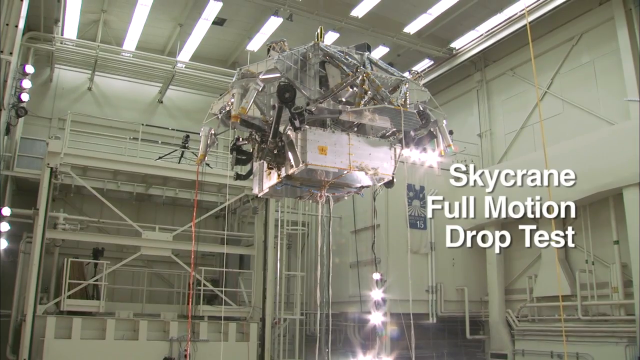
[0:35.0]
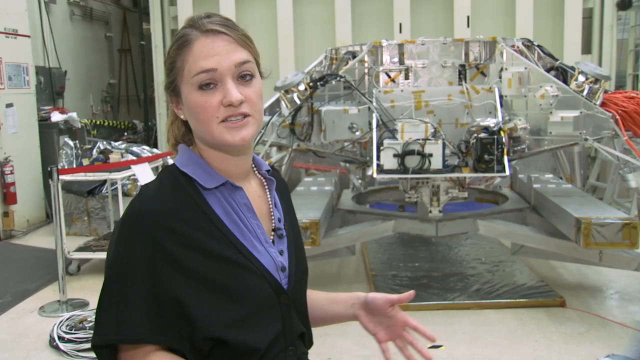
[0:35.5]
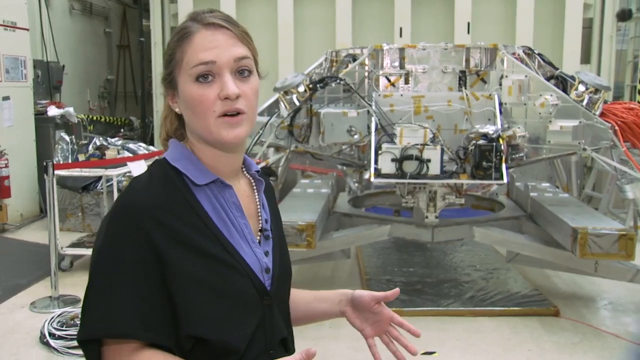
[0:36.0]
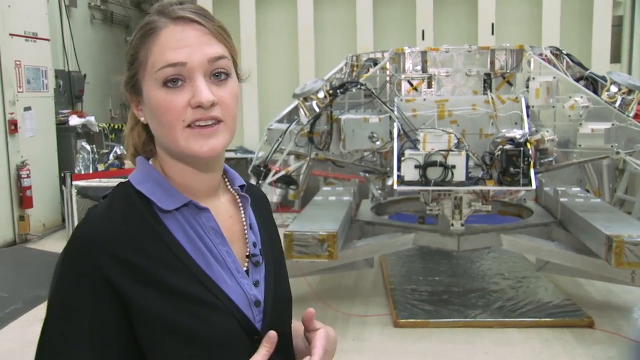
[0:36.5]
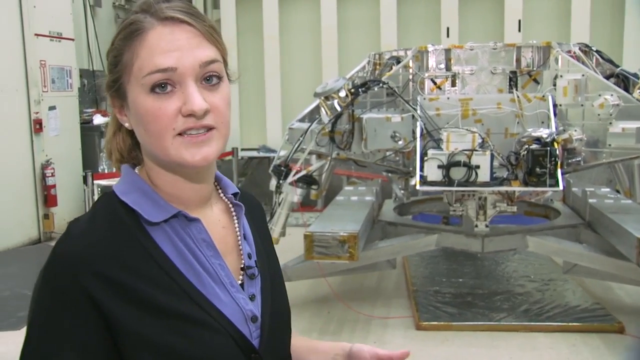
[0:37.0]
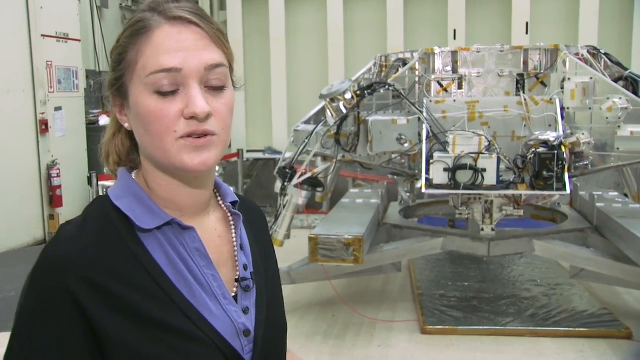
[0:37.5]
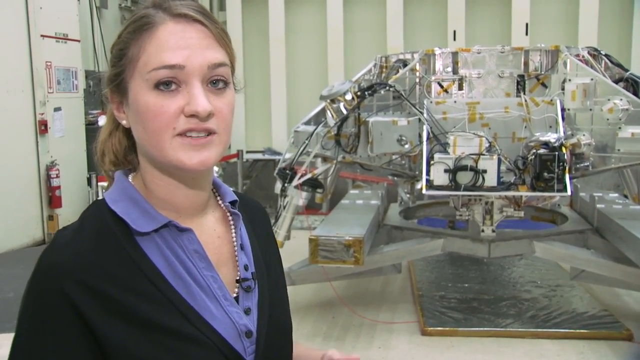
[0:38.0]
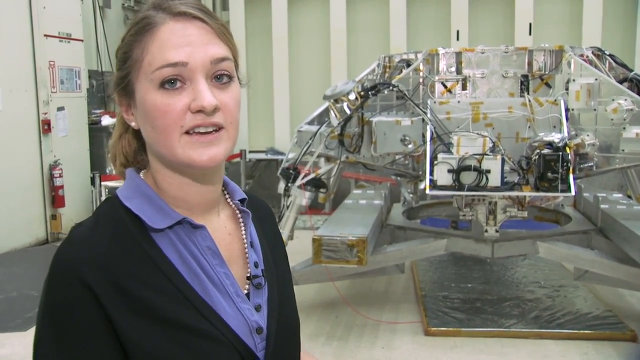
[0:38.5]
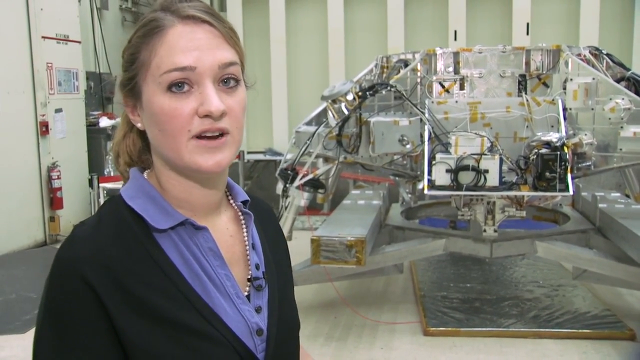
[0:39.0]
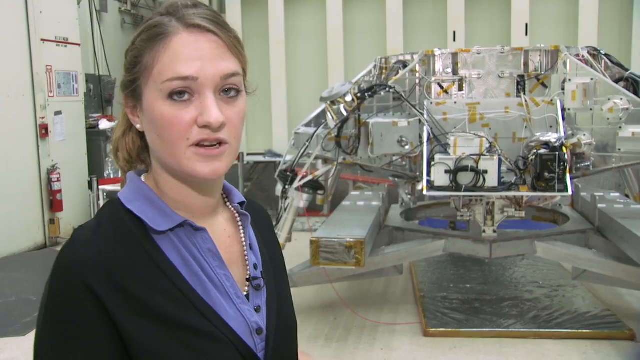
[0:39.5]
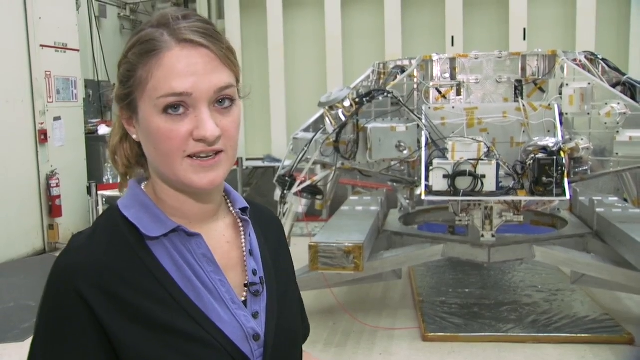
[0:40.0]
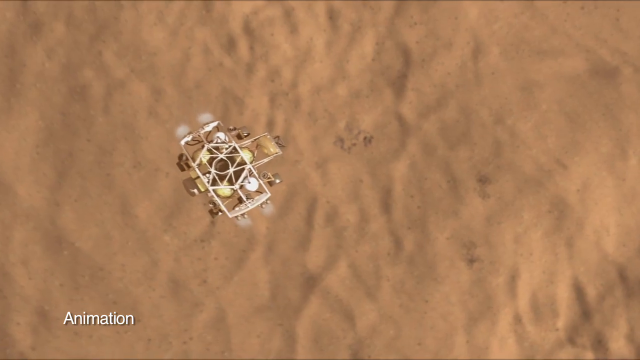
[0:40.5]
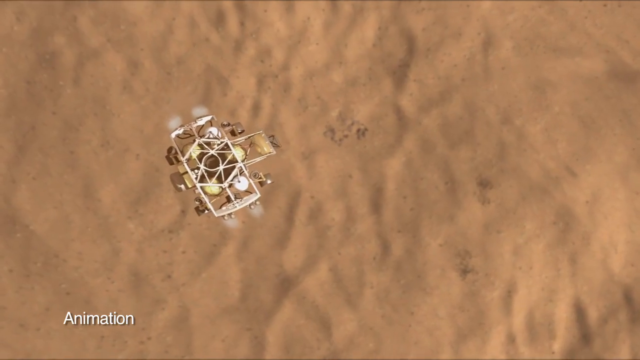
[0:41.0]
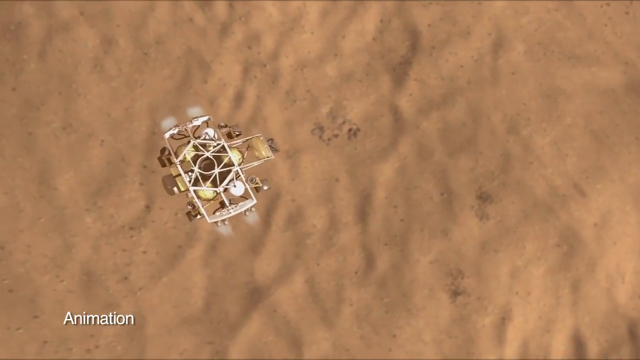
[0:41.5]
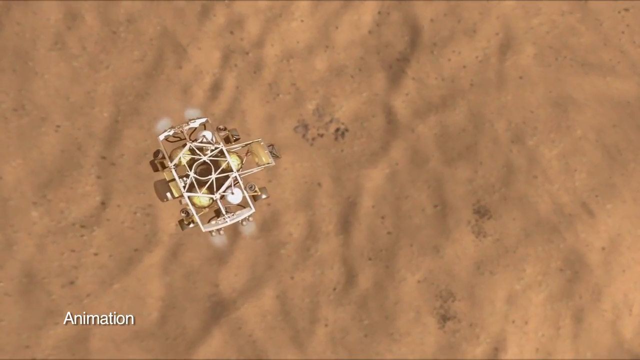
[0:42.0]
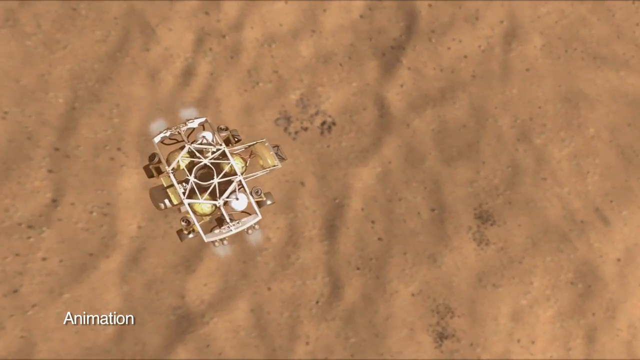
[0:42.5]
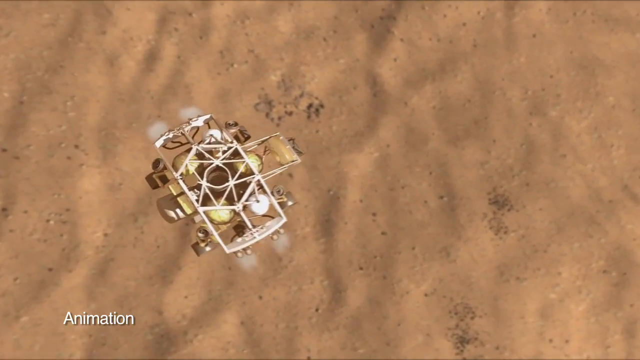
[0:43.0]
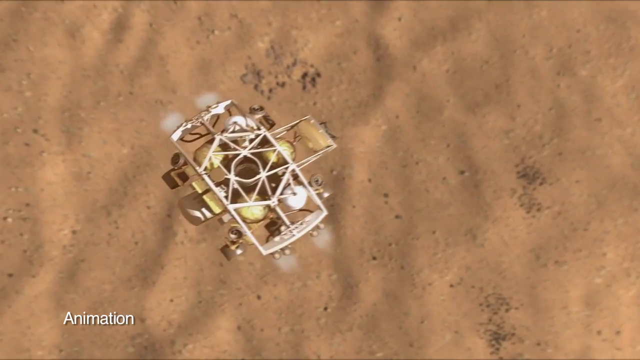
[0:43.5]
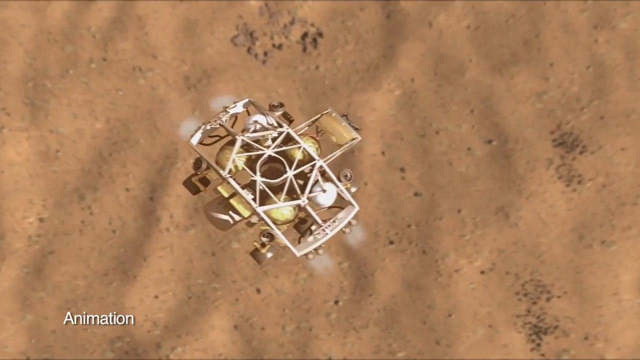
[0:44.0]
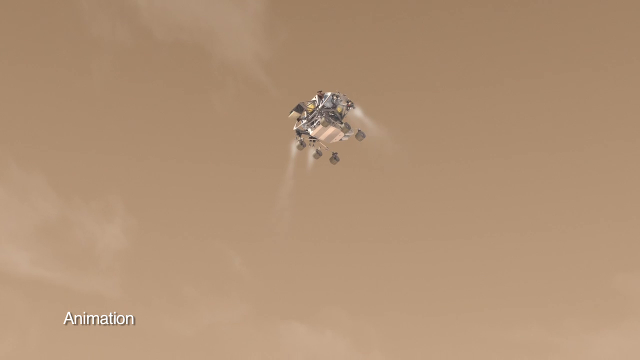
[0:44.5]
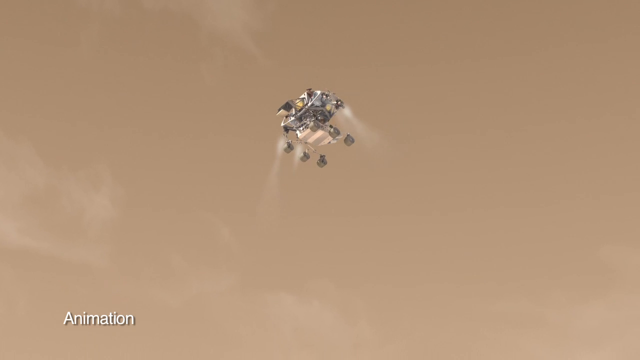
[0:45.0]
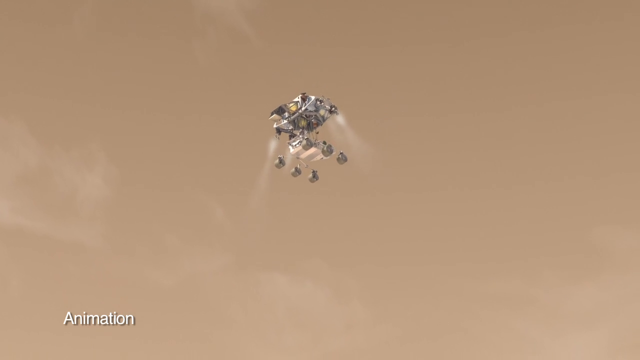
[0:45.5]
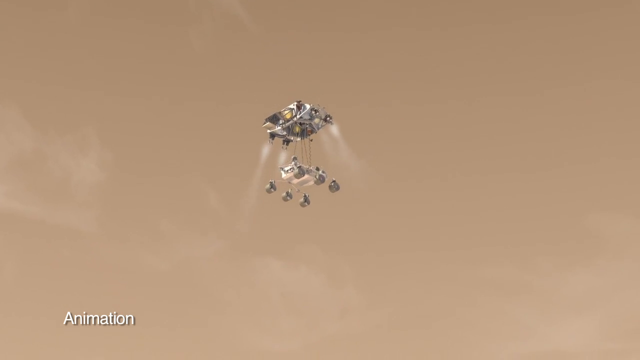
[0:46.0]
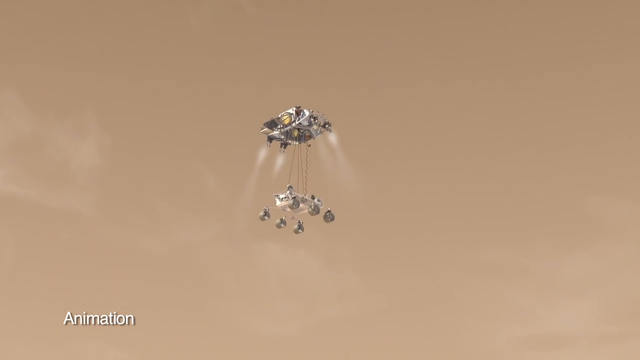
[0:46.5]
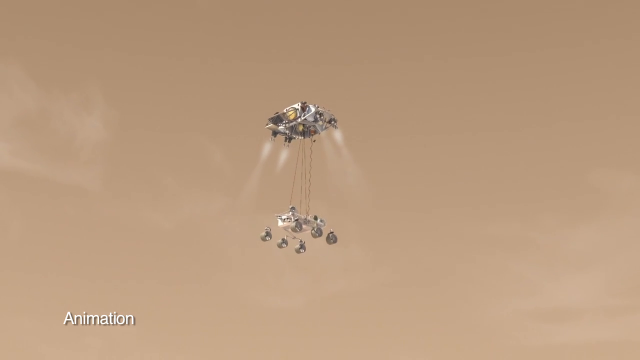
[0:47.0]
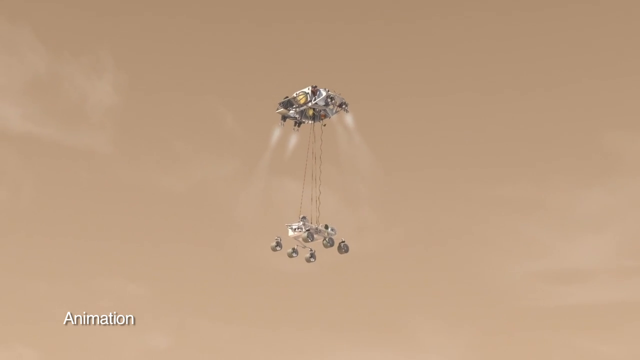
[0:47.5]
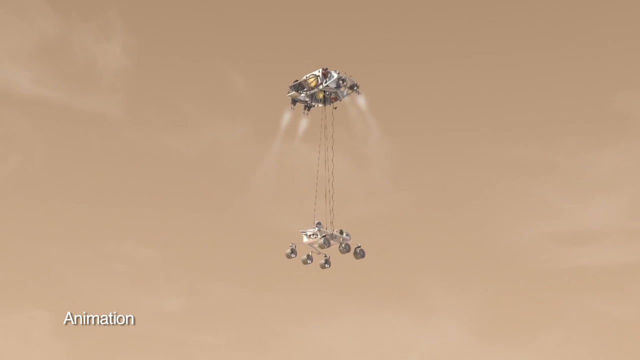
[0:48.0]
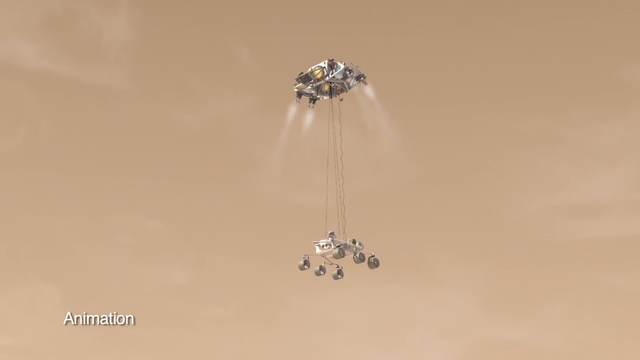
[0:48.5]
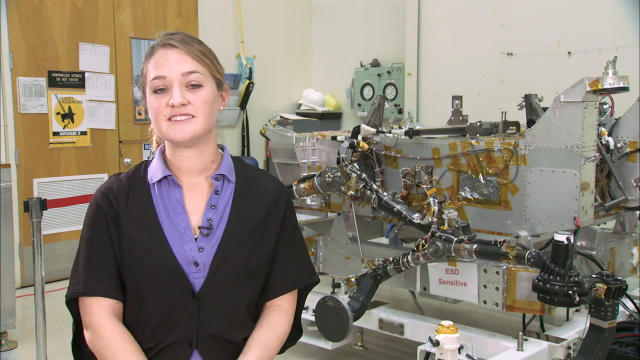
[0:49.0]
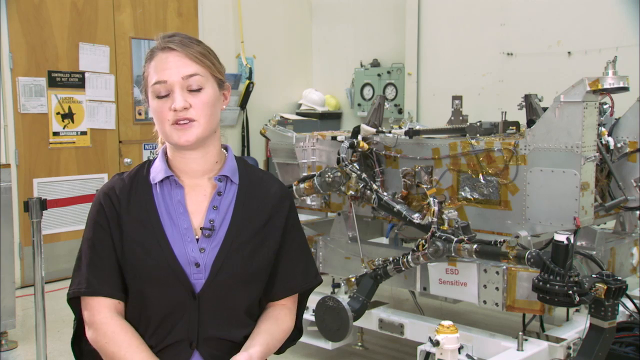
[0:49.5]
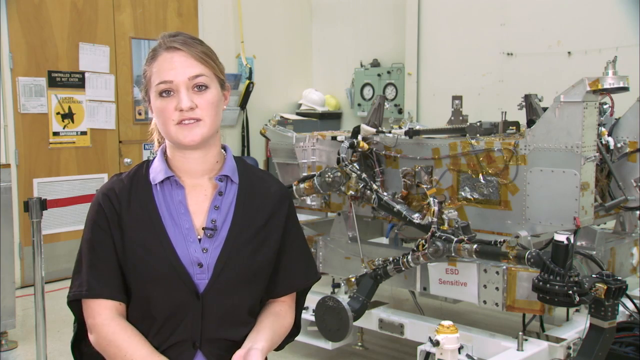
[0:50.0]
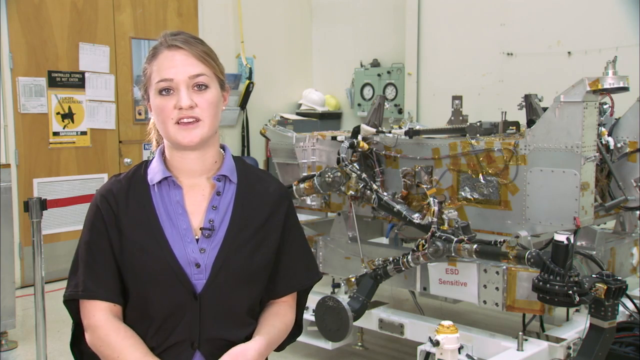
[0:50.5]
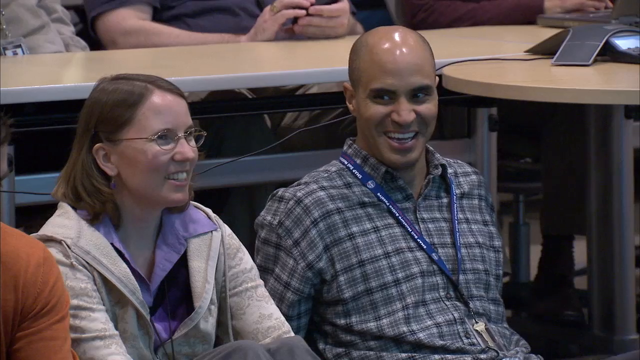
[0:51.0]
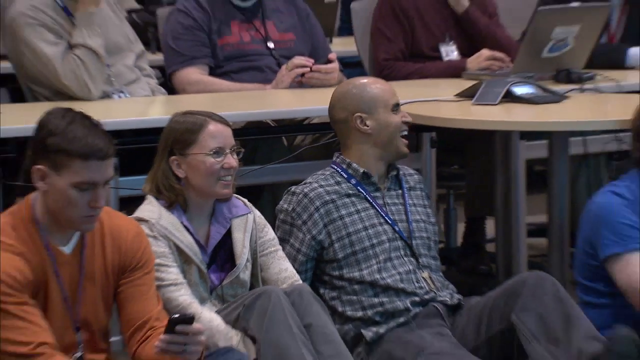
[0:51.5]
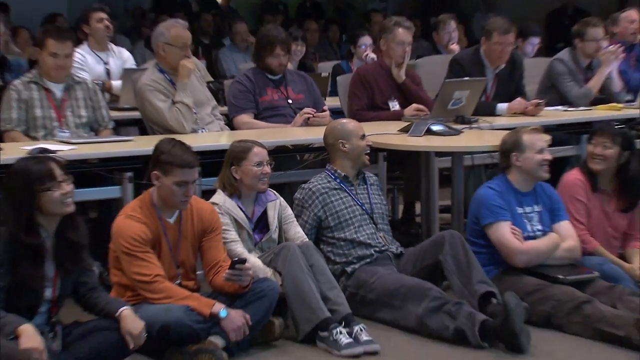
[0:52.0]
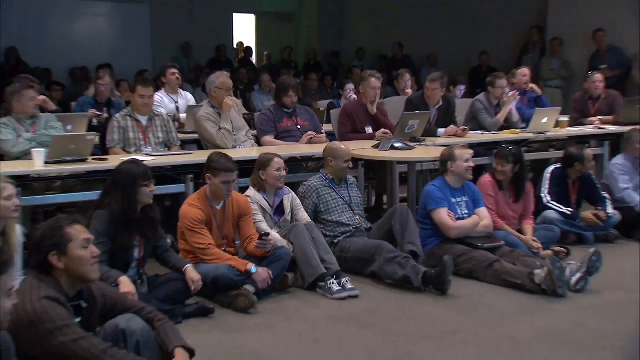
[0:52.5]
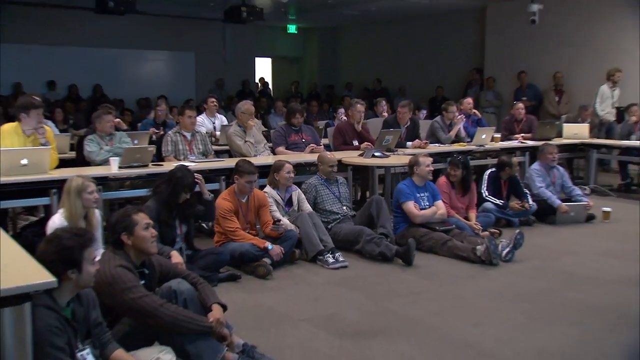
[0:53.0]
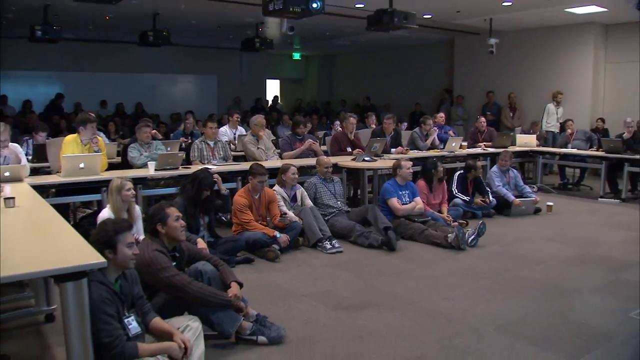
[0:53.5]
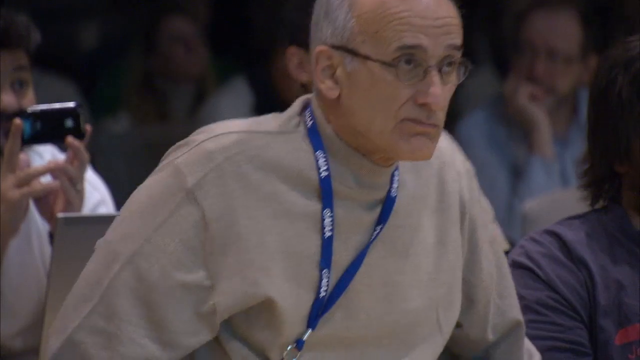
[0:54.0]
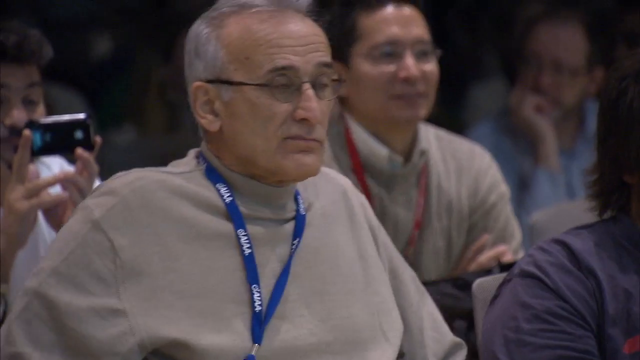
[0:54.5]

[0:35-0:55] The blonde woman in a purple top with a black pullover appears first, followed by an animation of a Mars rover landing on Mars in a very sandy location. Next, a group of men and women sit closely together in a room, looking at it. The video quickly shows a picture of a rover inside a building, then cuts back to the animation of the rover landing on Mars.